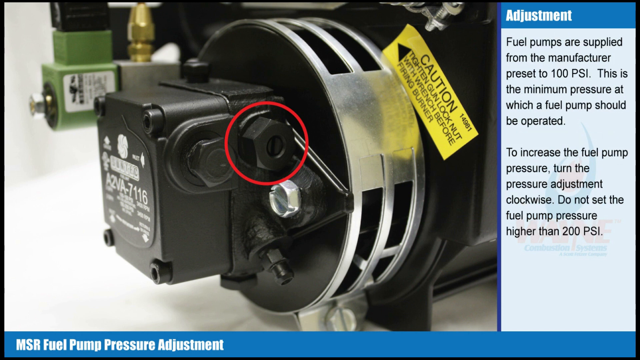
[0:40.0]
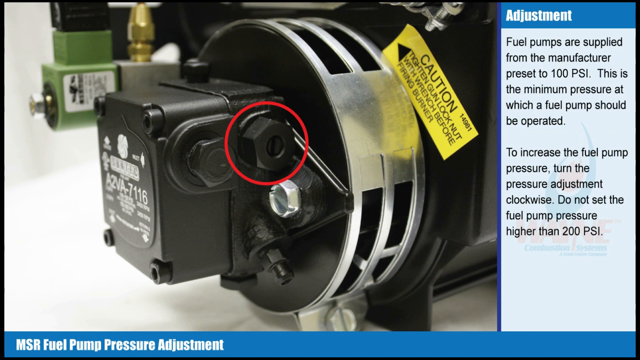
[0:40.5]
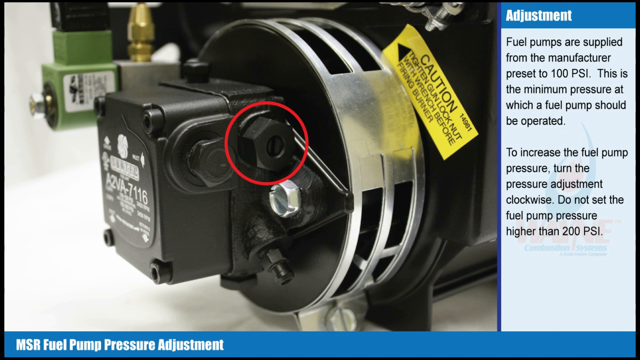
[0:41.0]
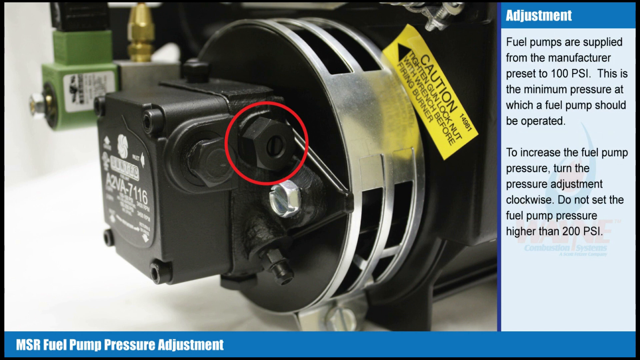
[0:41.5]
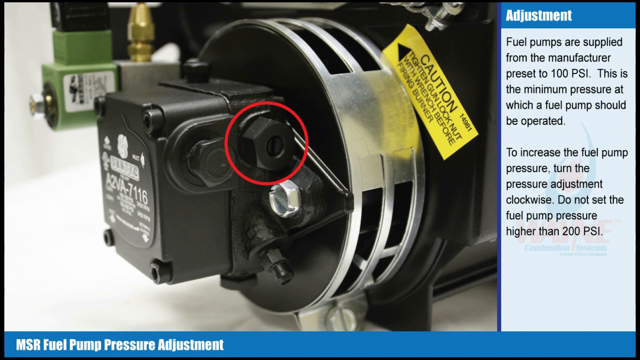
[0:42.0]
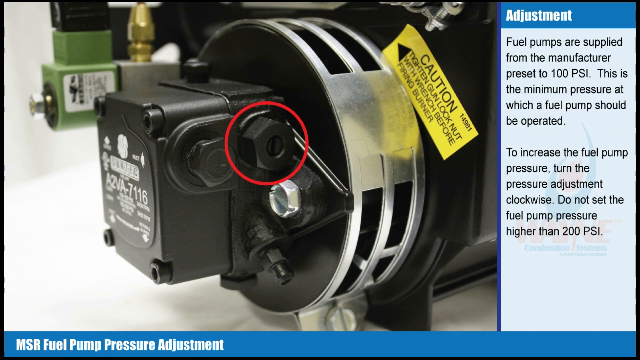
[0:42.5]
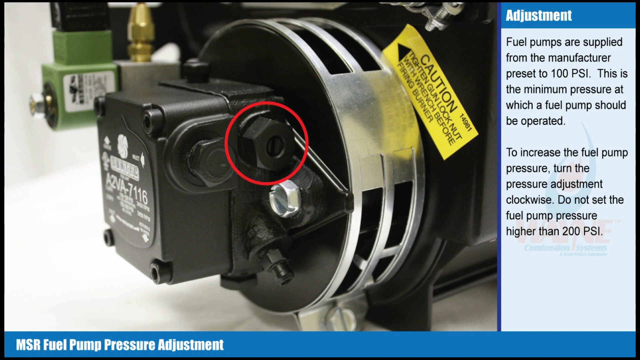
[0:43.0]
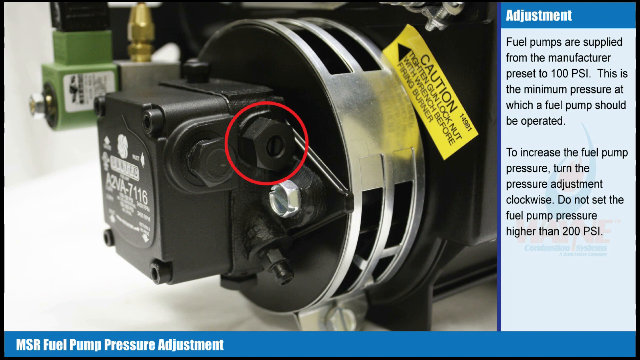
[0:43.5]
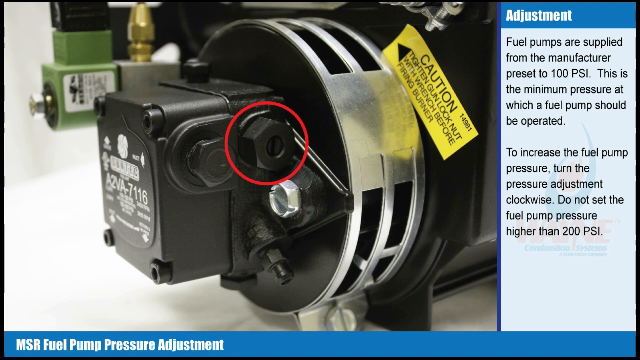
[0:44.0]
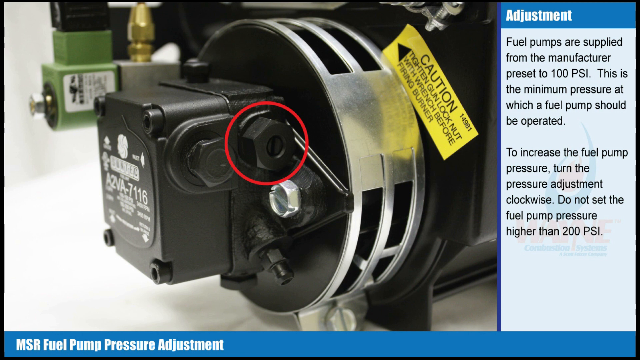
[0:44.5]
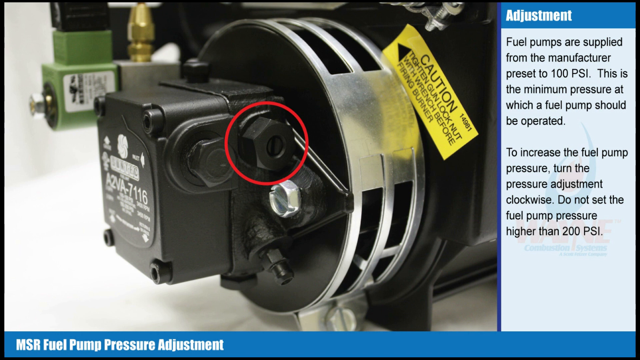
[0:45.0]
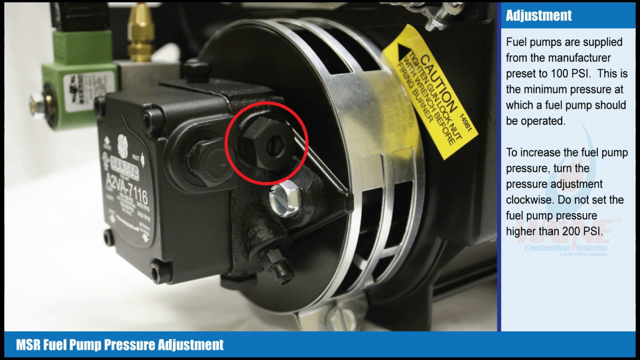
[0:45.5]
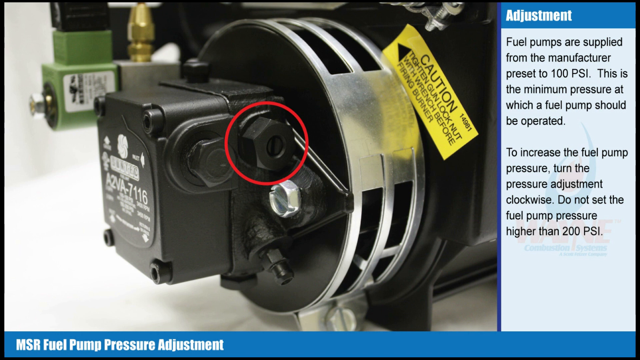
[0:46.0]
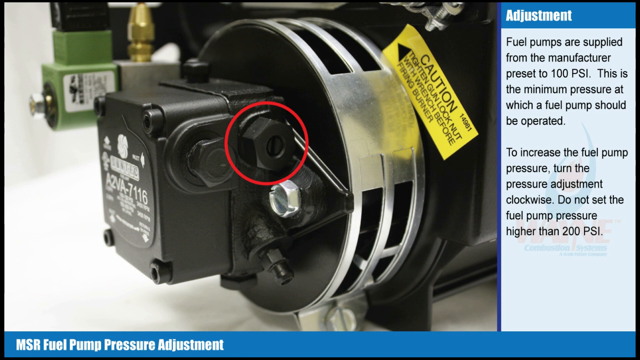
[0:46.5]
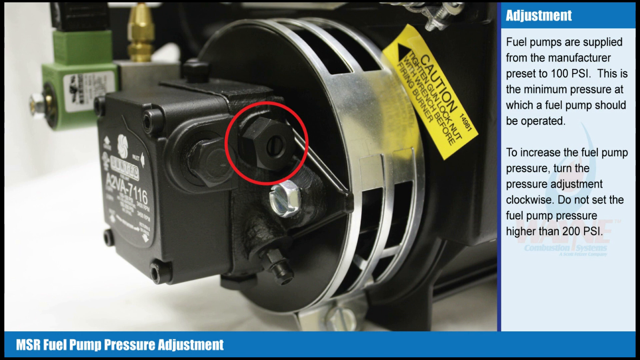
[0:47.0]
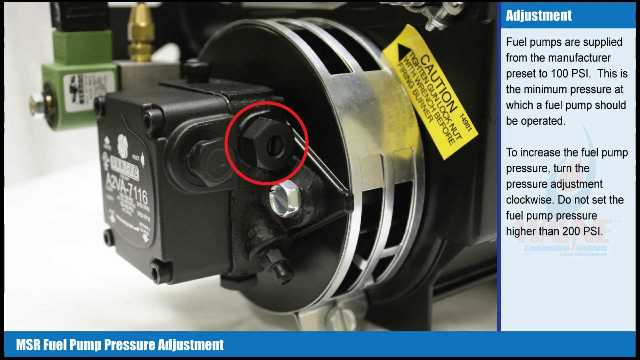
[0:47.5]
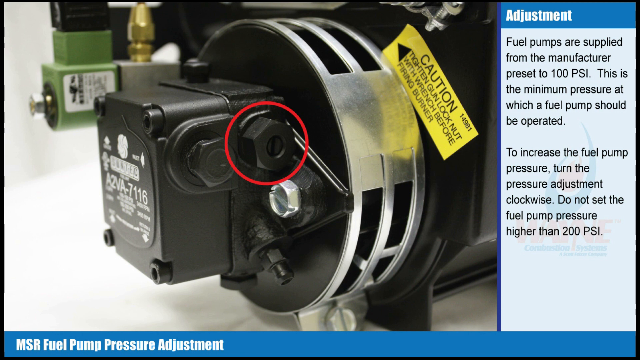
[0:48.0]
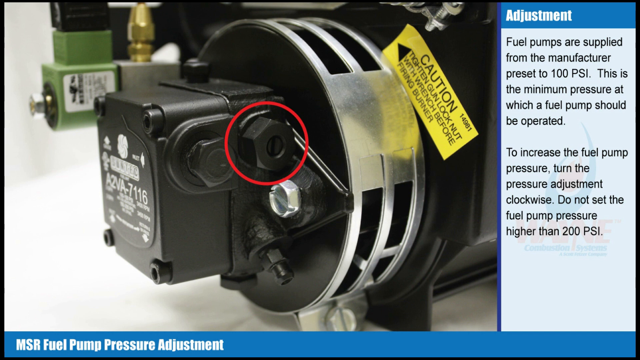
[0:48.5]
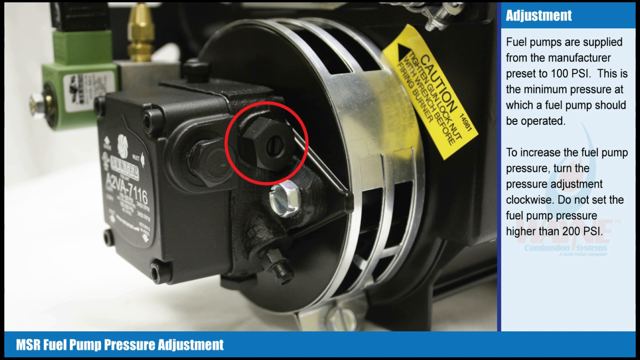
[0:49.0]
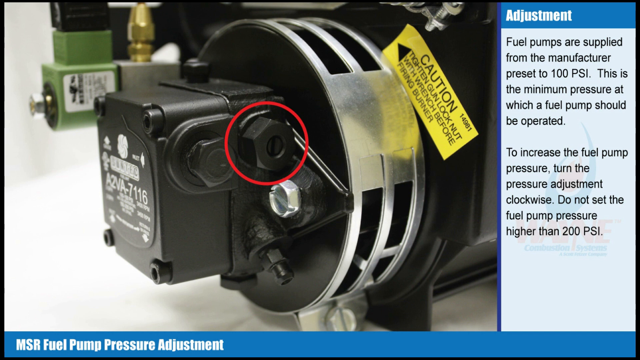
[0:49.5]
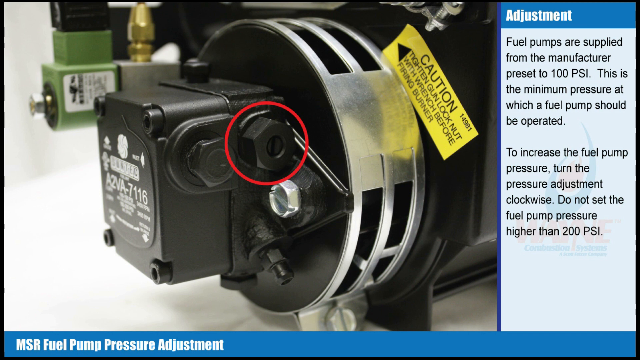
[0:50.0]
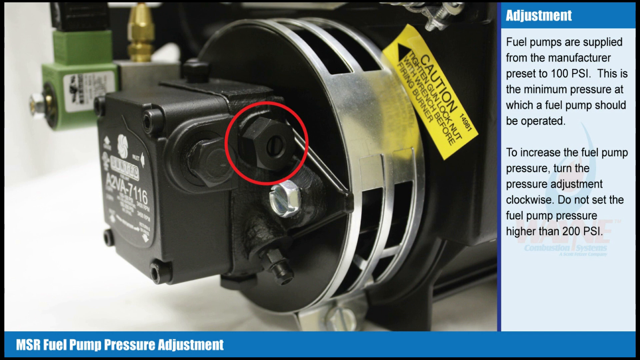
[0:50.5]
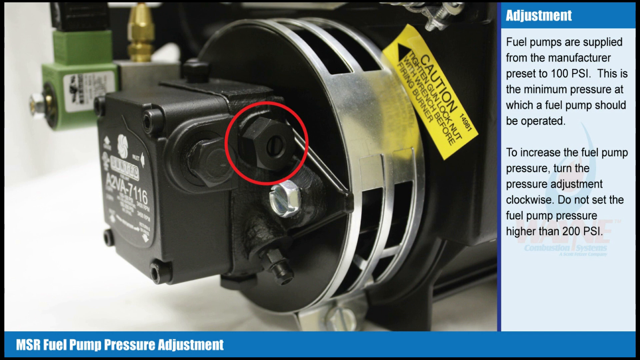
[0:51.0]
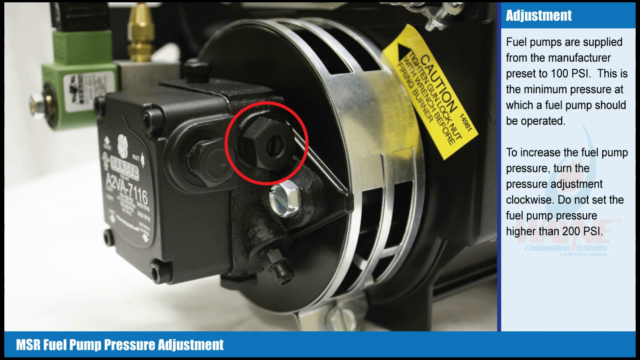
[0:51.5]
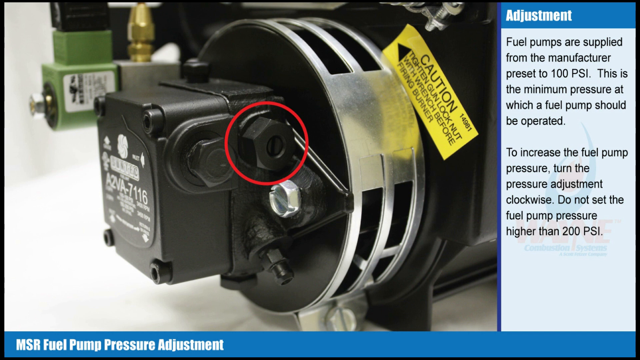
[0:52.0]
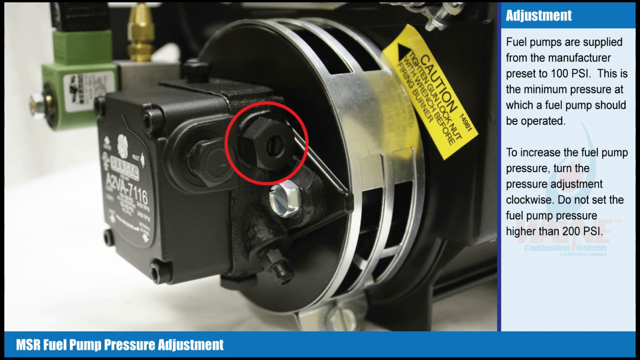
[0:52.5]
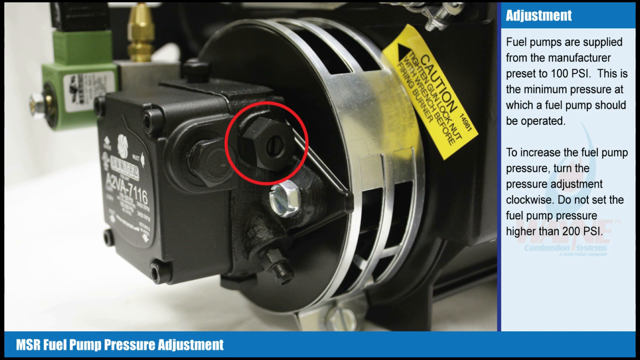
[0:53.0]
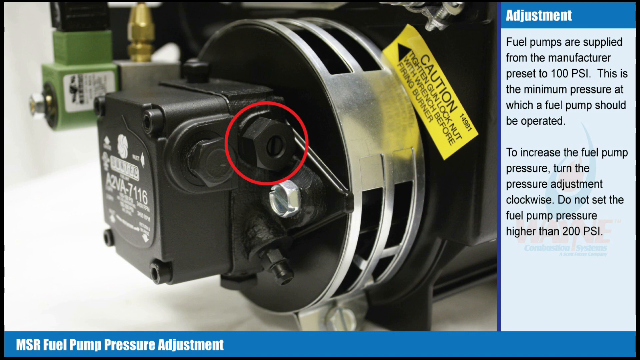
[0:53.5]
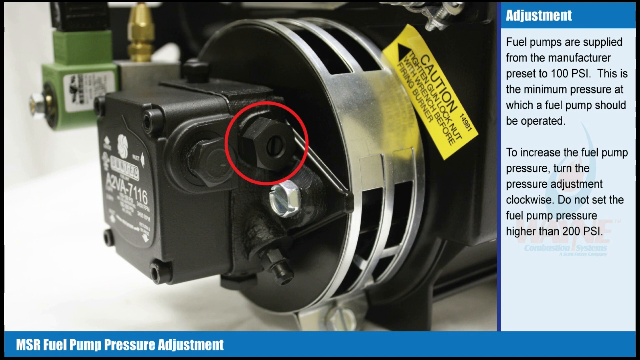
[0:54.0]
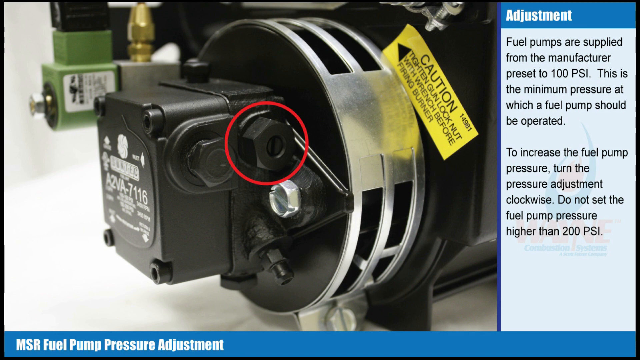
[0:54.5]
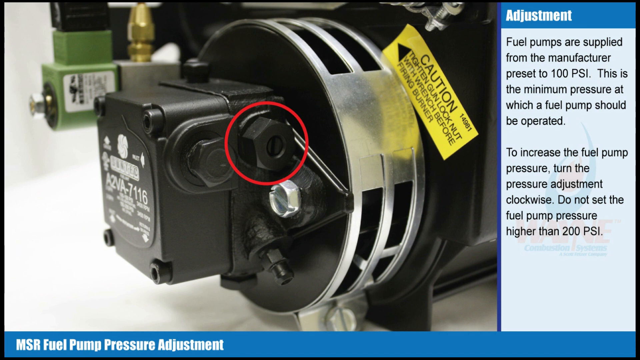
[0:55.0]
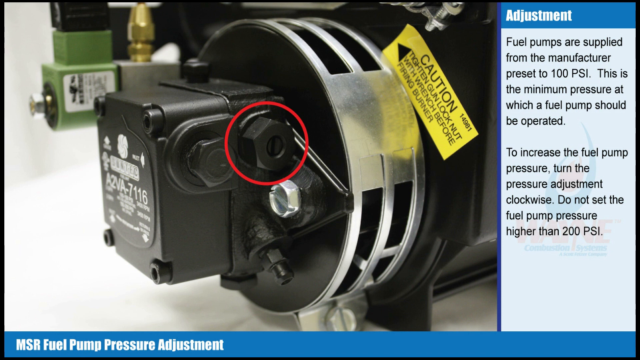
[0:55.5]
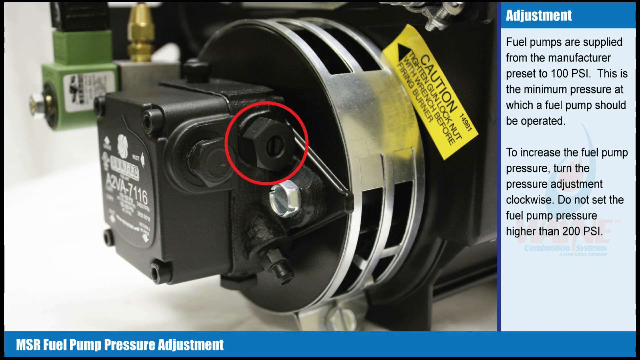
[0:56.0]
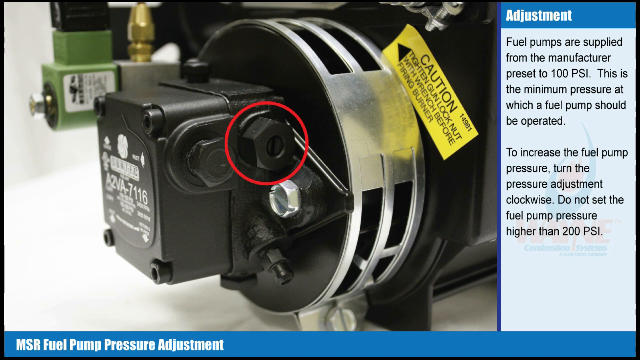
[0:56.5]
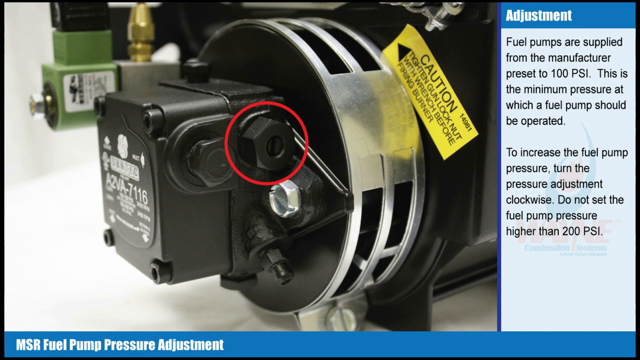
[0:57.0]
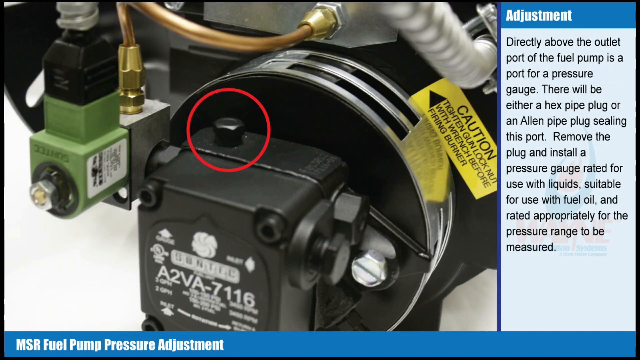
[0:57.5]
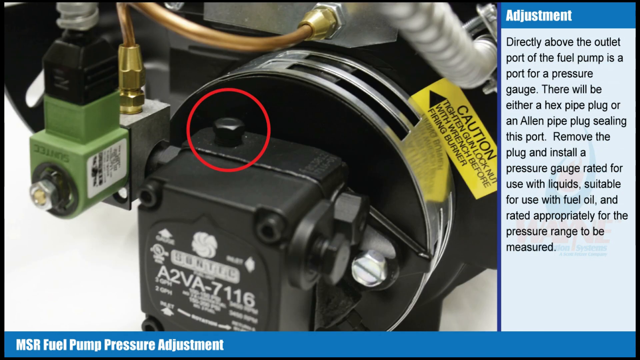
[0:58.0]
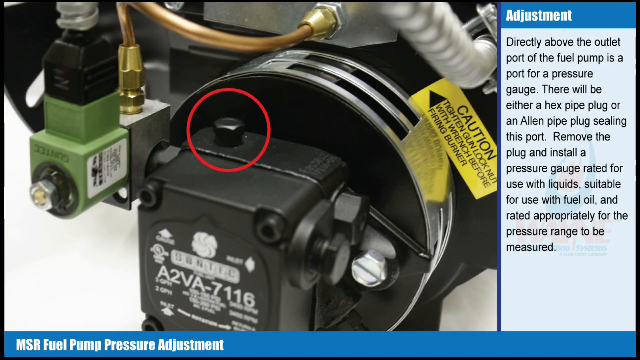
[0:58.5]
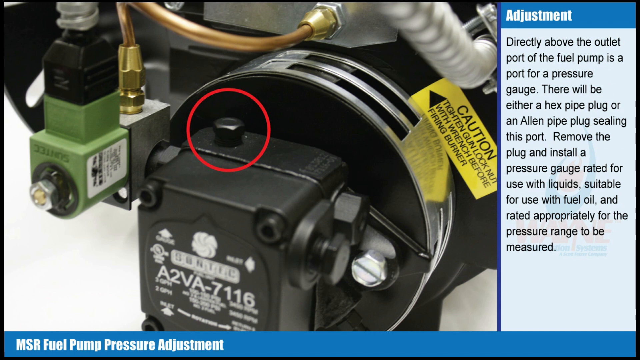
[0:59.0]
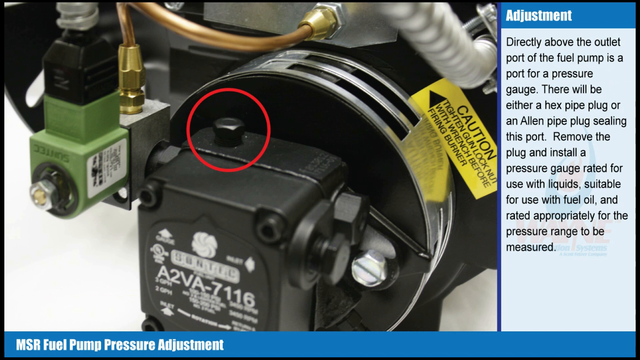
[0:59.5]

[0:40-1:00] The same picture of the fuel pump remains, but the text on the right side changes to read "fuel pumps are supplied from manufacturer preset to 100 PSI. This is the minimum pressure at which a fuel pump should be operated. To increase the fuel pump pressure, turn the pressure adjustment clockwise. Do not set the fuel pump pressure higher than 200 PSI." At the end, the image changes to a different view of the fuel pump, this time highlighting a knob at the top of the pump. The text changes to read "directly above the outlet port of the fuel pump is a port for a pressure gauge. There will be either a hex pipe plug or an allen pipe plug sealing this port. Remove the plug and install a pressure gauge rated for use with liquids, suitable for use with fuel oil, and rated appropriately for a pressure range to be measured."